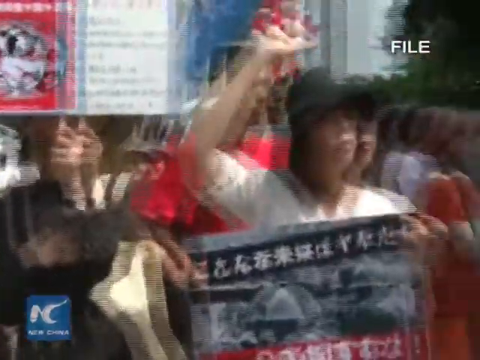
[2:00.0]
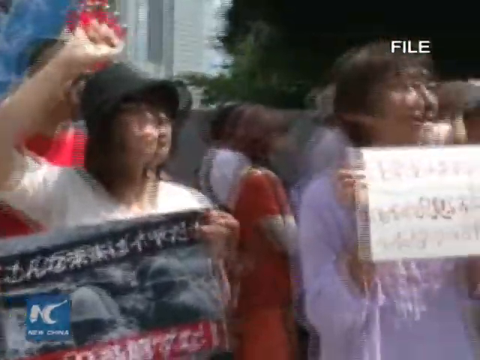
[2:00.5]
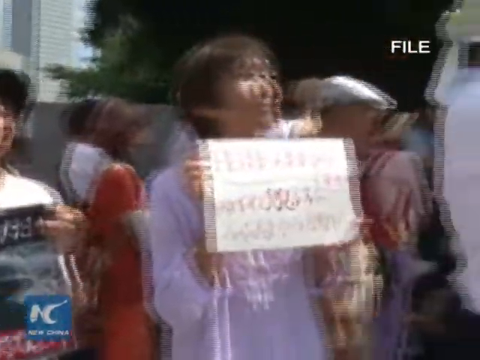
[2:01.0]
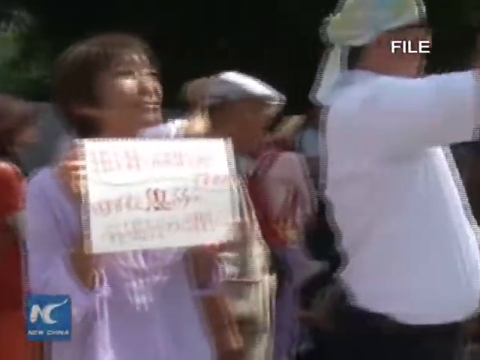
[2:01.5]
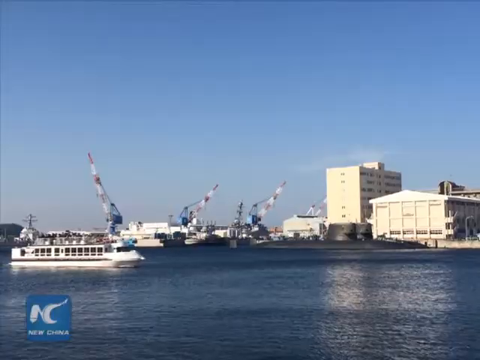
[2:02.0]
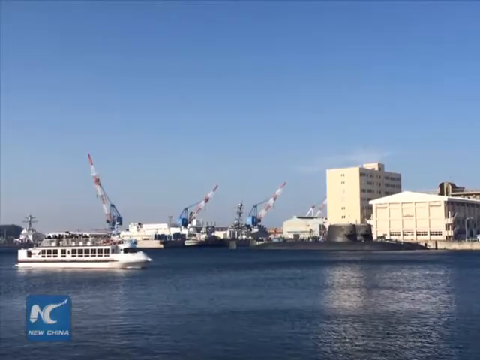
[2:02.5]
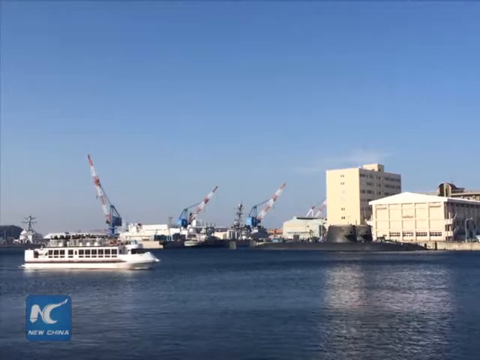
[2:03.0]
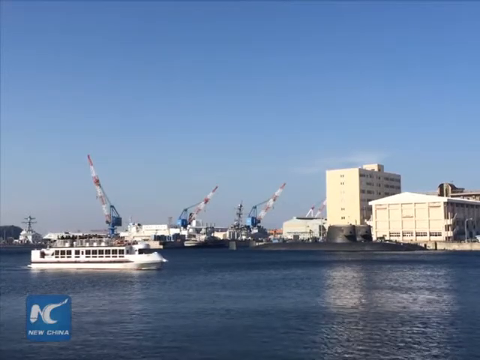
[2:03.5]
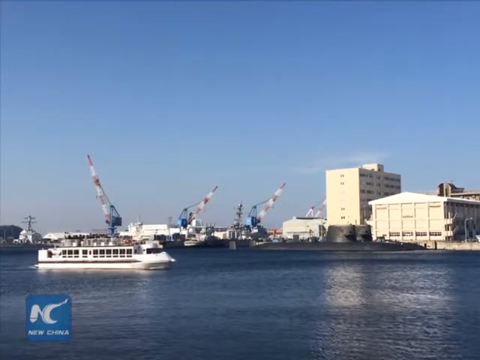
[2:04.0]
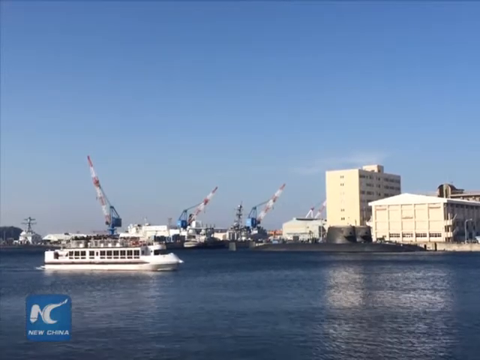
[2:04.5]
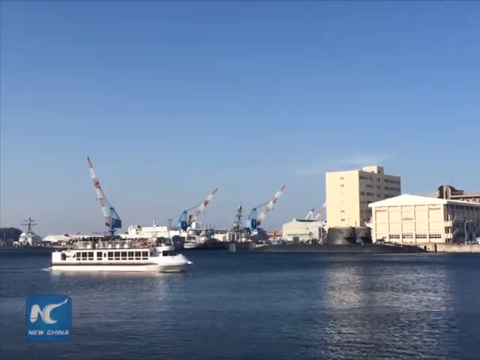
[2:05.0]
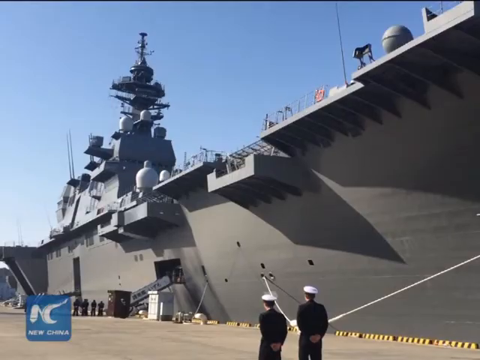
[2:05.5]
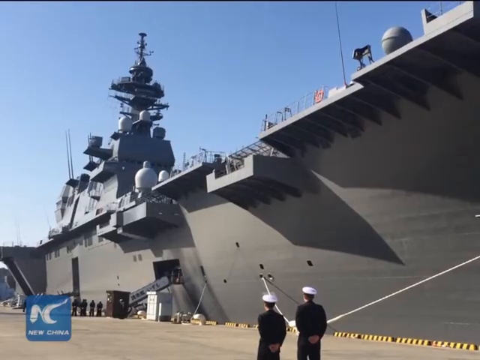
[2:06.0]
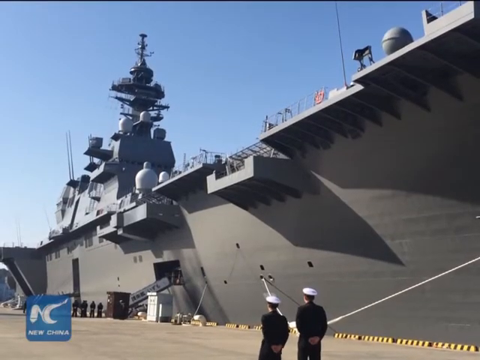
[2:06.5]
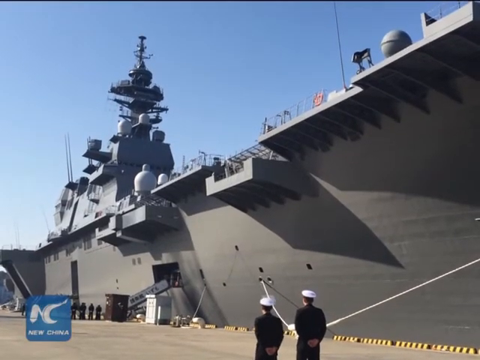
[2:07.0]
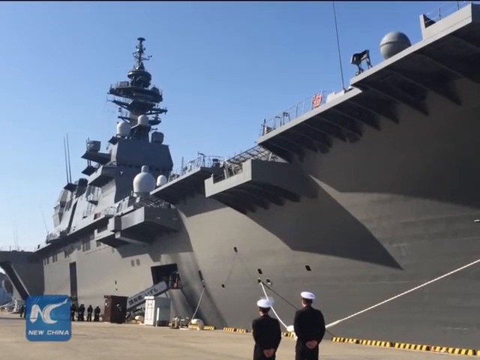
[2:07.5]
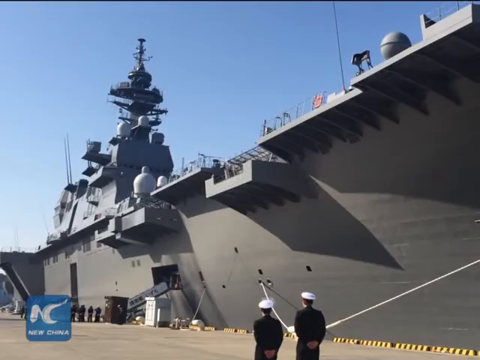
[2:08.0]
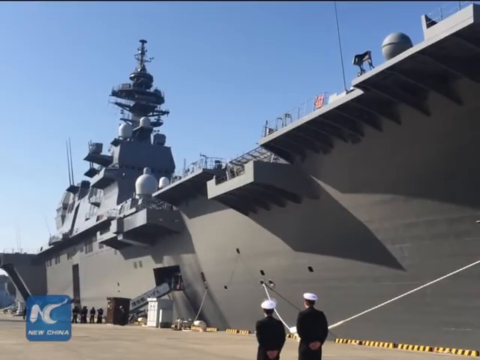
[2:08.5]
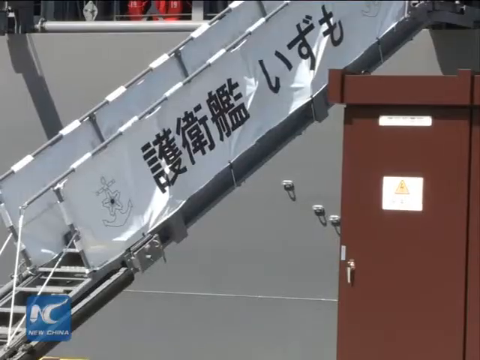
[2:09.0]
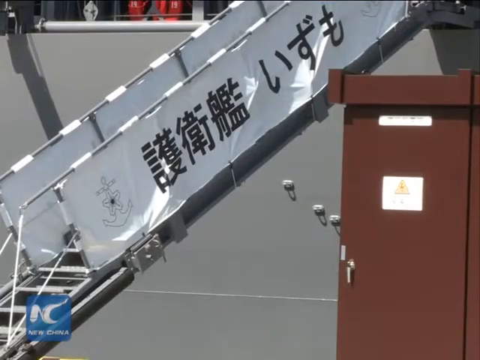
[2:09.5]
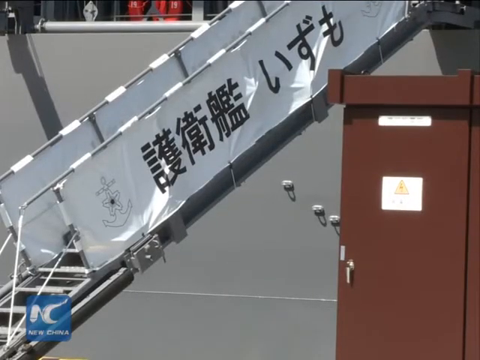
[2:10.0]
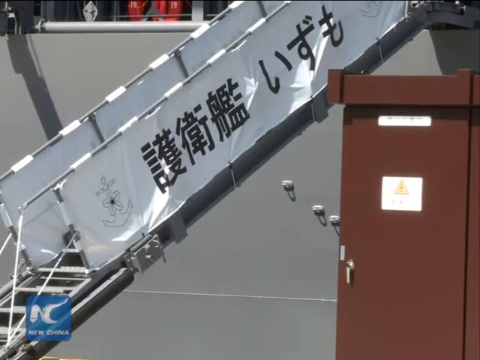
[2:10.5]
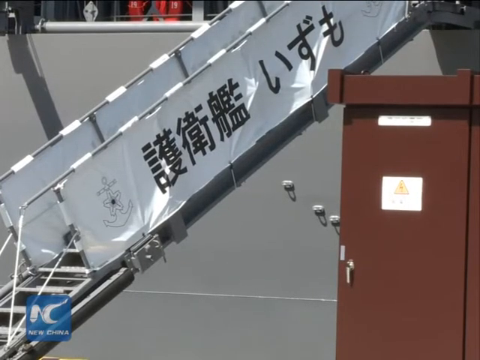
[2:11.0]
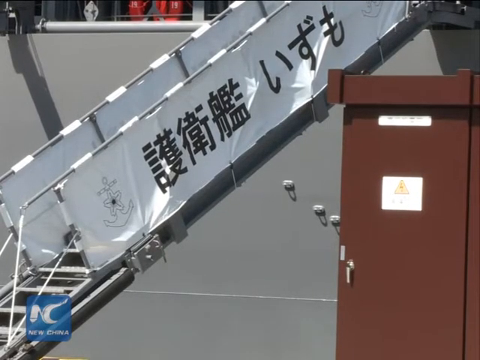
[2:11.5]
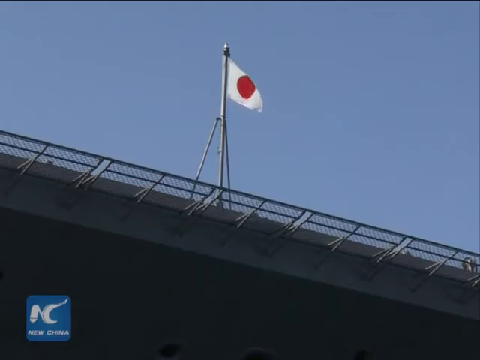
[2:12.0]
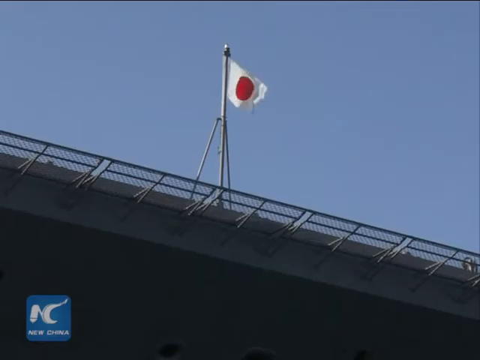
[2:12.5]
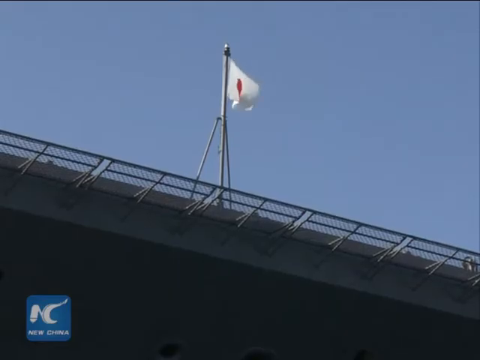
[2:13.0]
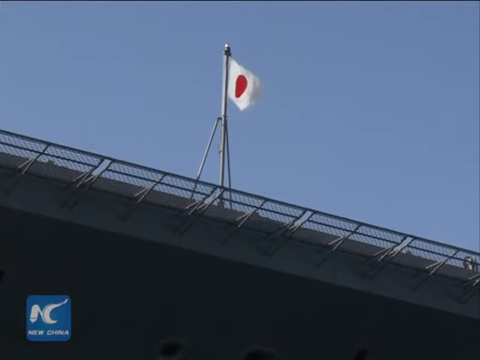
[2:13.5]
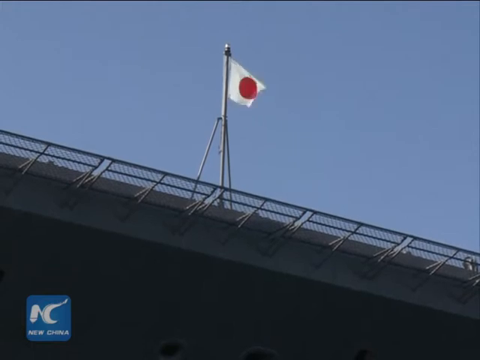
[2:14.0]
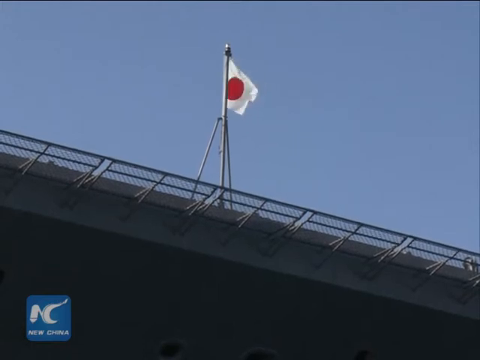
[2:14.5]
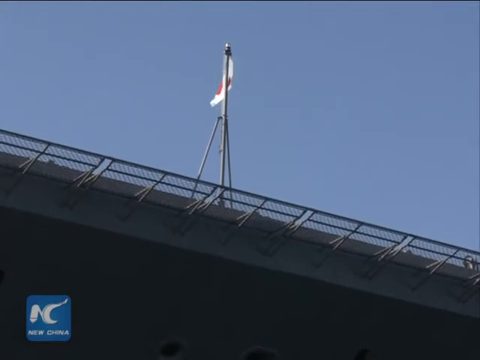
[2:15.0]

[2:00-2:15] The protest continues, with dozens and dozens of people standing around holding signs that say "no." The signs are written in Japanese kanji and have no English words, making them hard to read. The protesters do not look very upset; they look sort of stone-faced, almost emotionless. One picture displays a soccer ball with a picture of a machine gun or a missile inside each of its polygonal shapes, apparently in protest against military action or war.